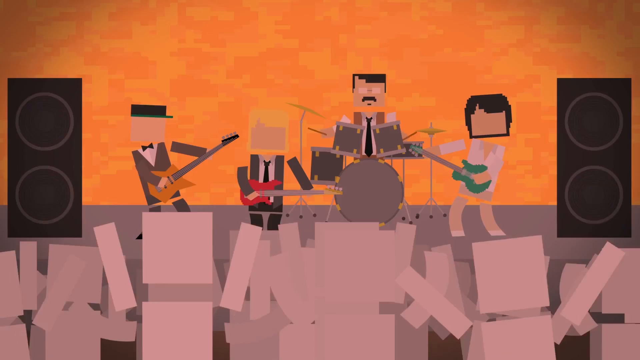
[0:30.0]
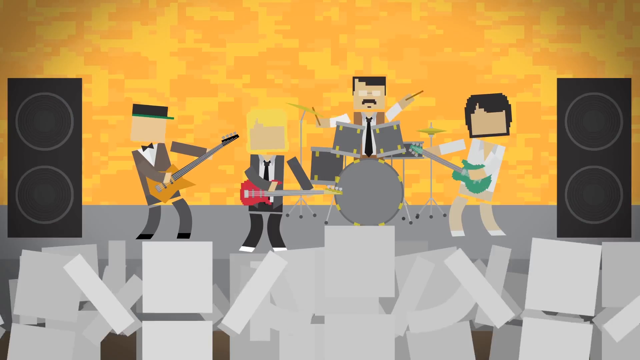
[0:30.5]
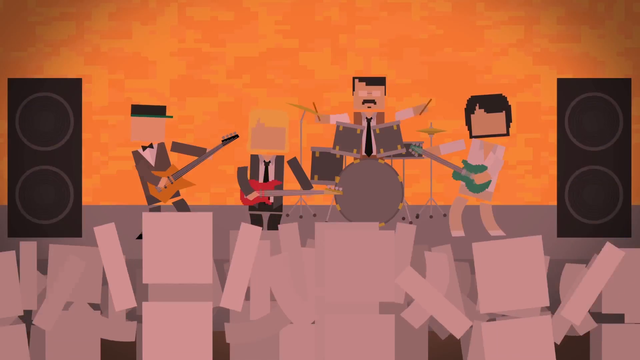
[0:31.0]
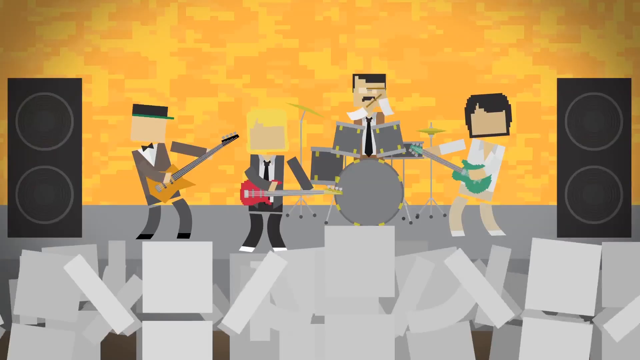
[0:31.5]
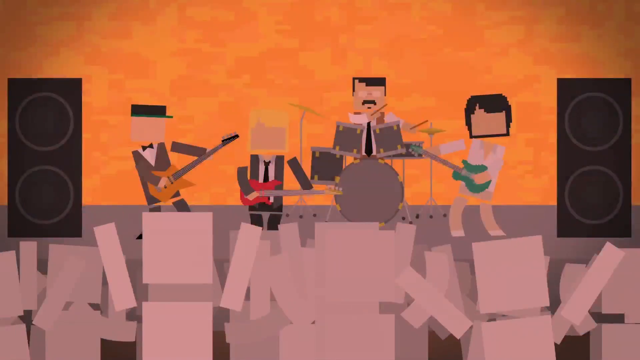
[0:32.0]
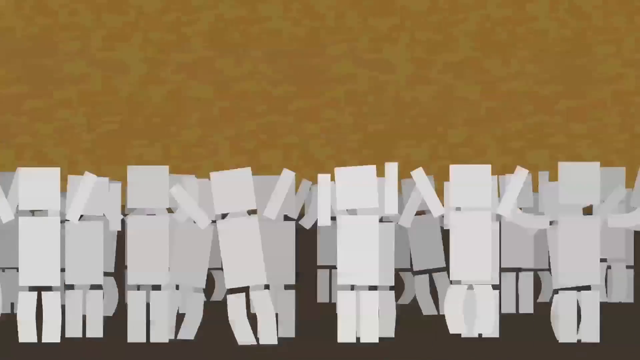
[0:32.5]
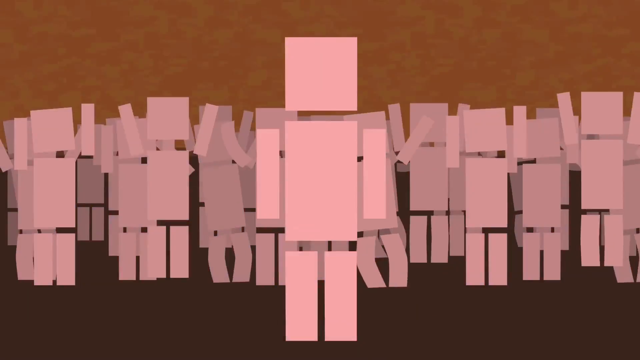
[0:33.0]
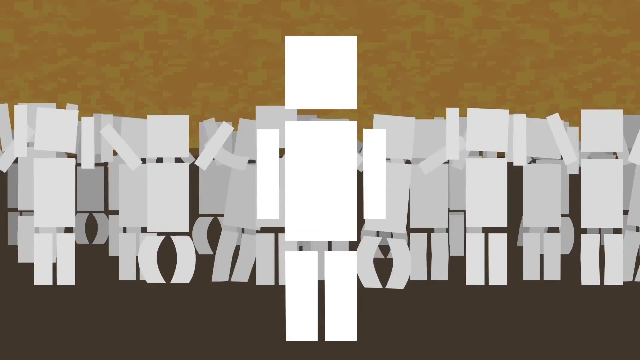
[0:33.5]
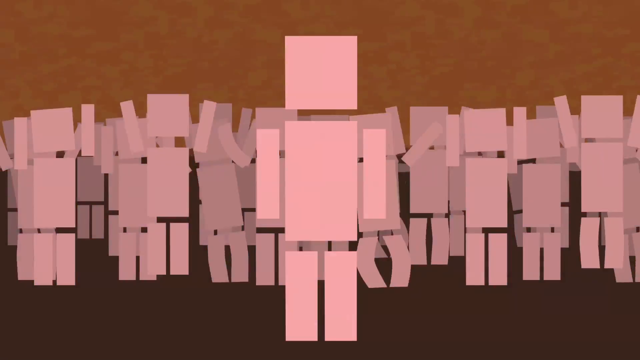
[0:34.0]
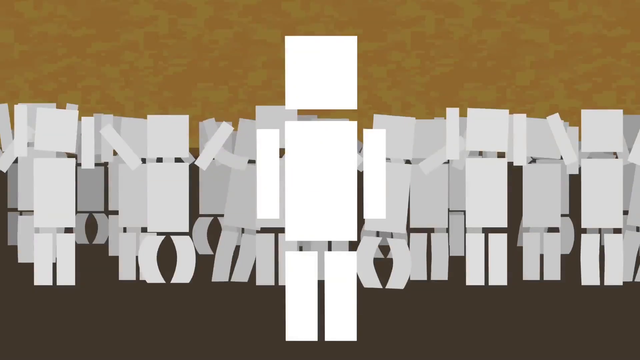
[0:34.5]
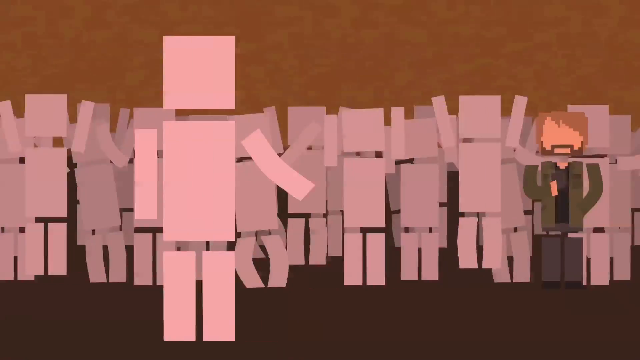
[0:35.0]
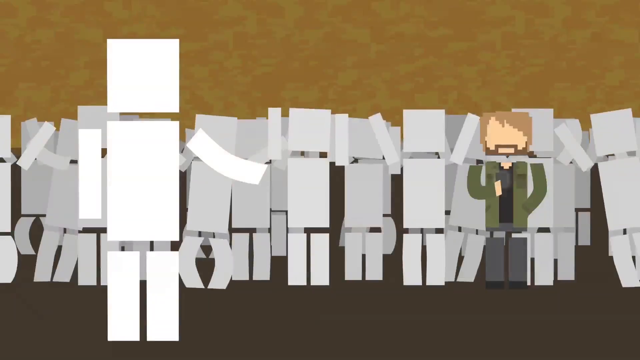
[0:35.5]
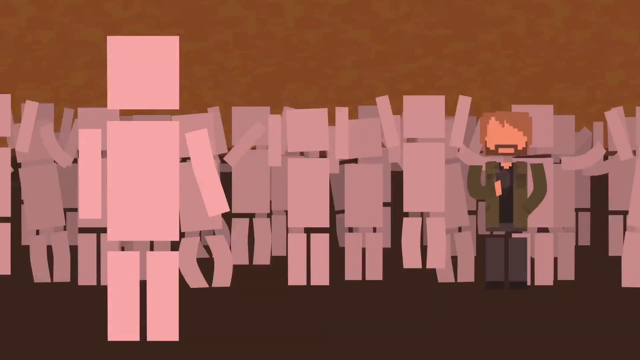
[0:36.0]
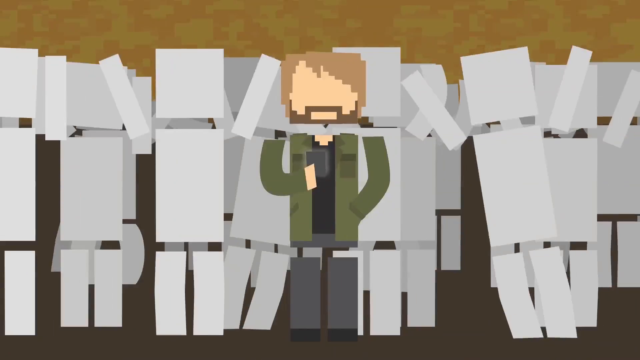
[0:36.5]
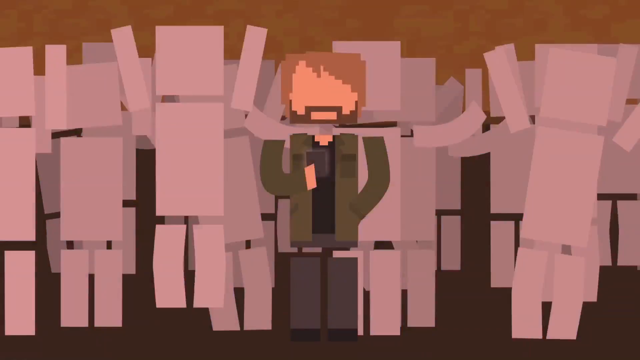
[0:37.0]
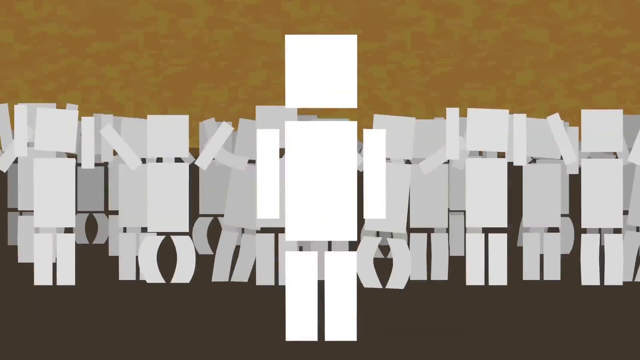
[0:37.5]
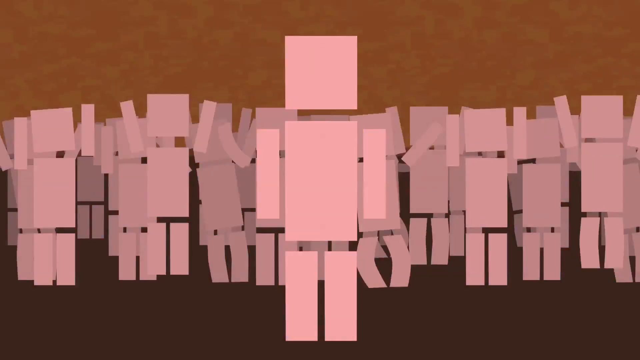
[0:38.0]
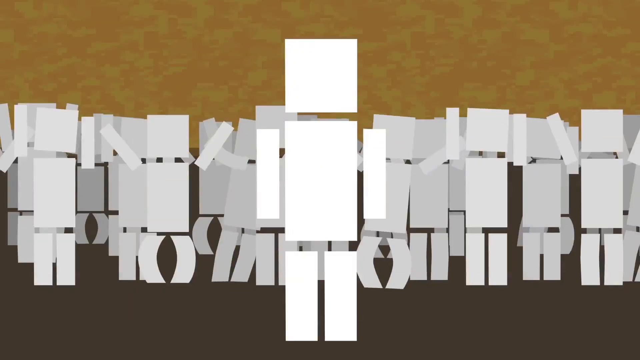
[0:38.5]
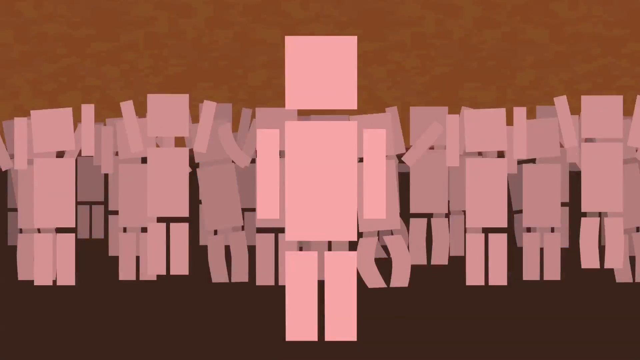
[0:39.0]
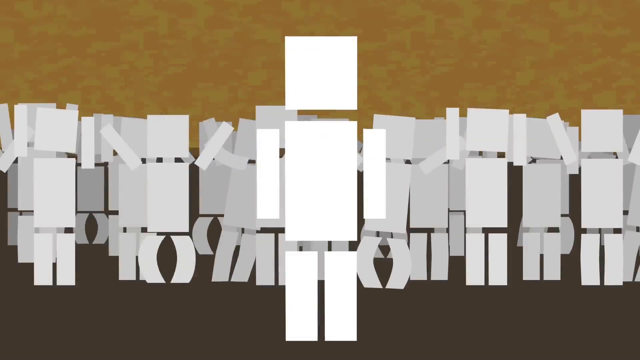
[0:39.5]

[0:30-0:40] The band continues playing as the lights flash red on and off. The camera pans to the right, revealing the crowd with the main blockhead character in the foreground; the crowd jumps up and down, waving their hands in the air. The camera pans further right to a more developed character in a similar block style, but with pigment in his skin and some hair, wearing a green outfit over his torso and gray pants, with a beard connecting to his mustache in a goatee. The camera pans quickly back to the main blockhead character, who is slowly moving his head up and down.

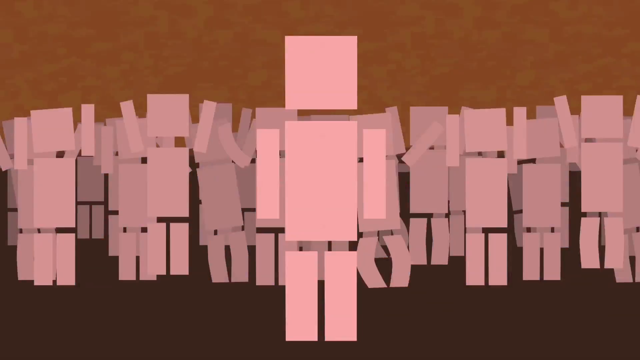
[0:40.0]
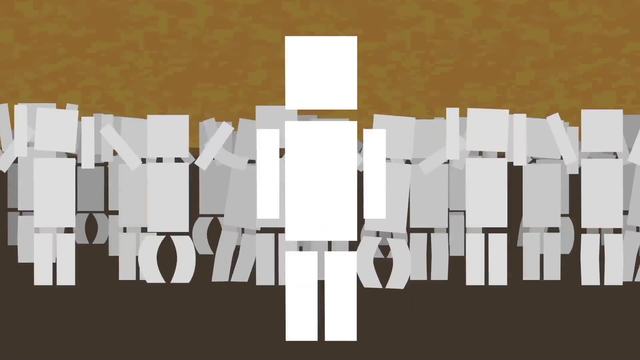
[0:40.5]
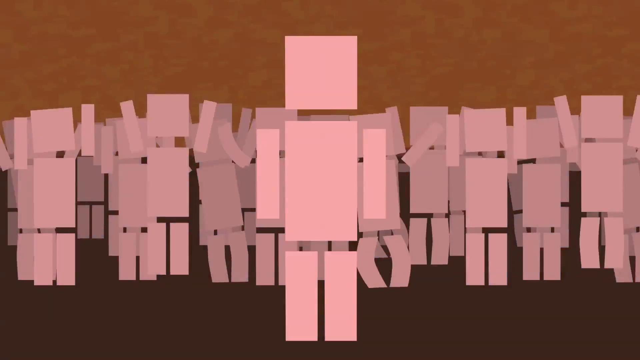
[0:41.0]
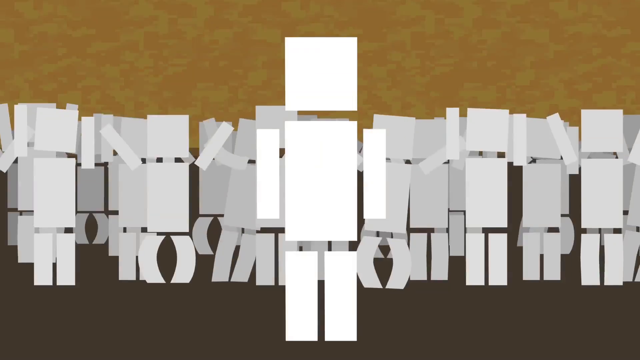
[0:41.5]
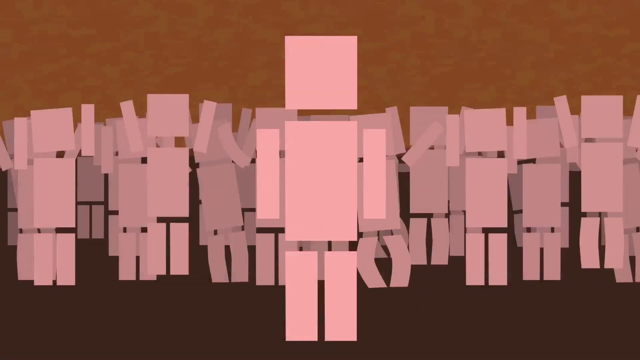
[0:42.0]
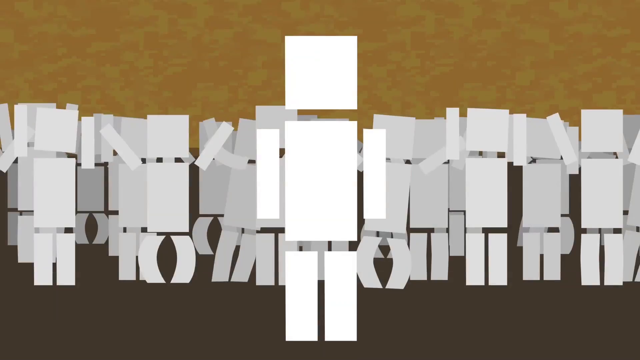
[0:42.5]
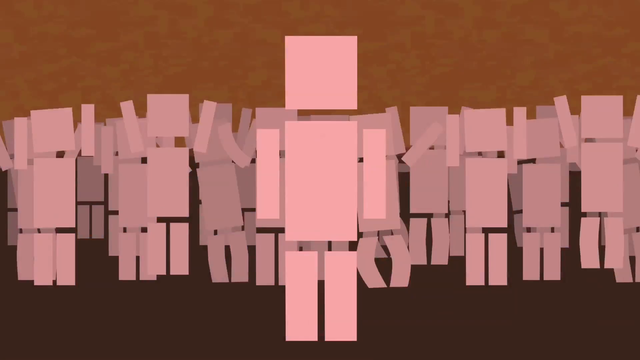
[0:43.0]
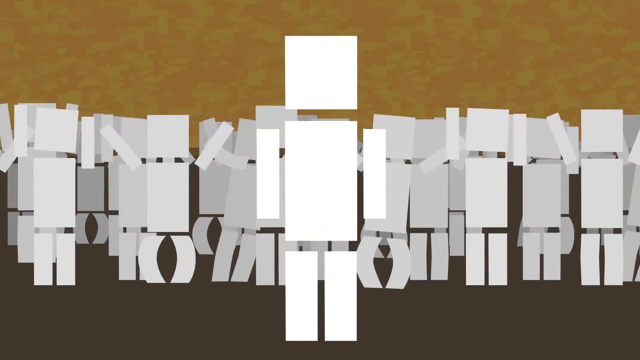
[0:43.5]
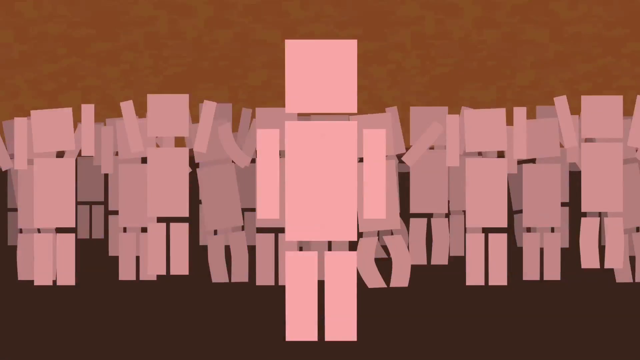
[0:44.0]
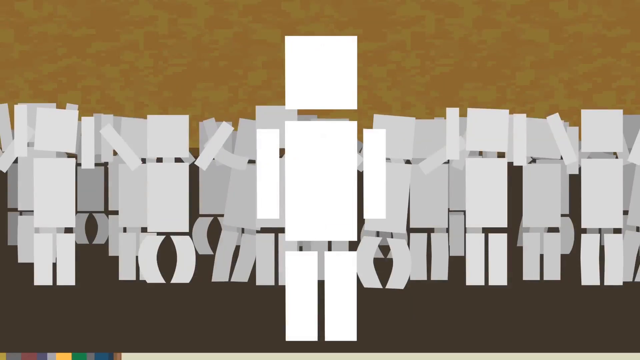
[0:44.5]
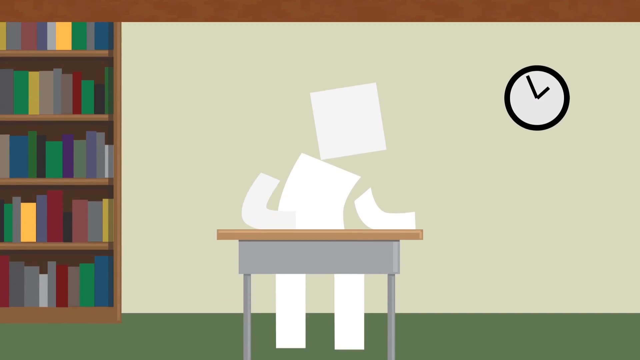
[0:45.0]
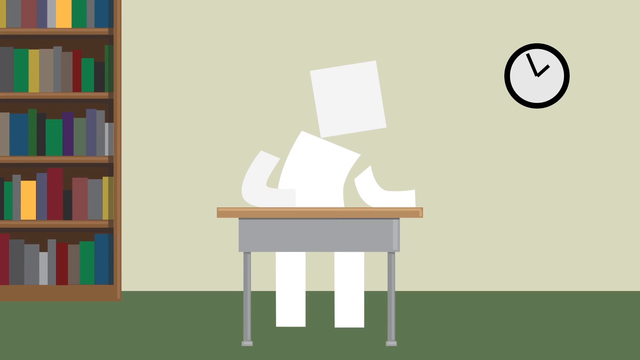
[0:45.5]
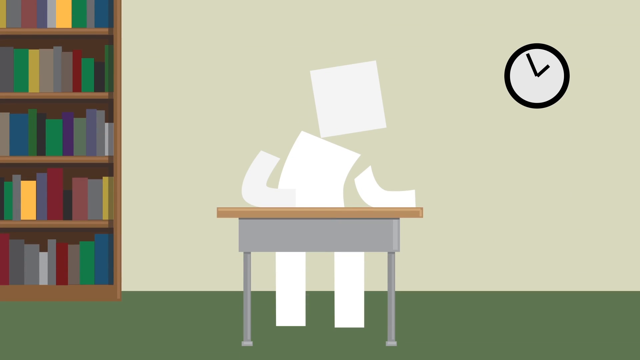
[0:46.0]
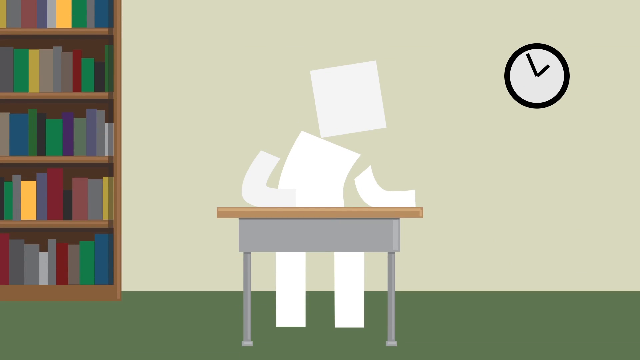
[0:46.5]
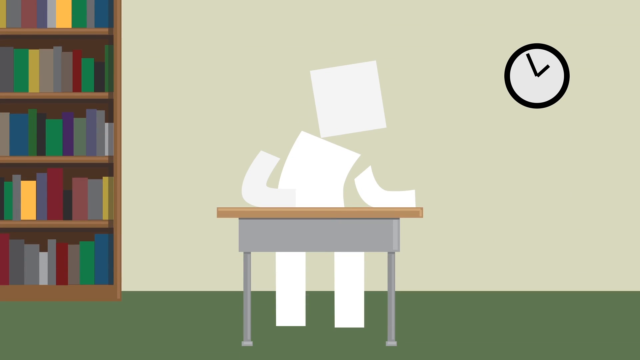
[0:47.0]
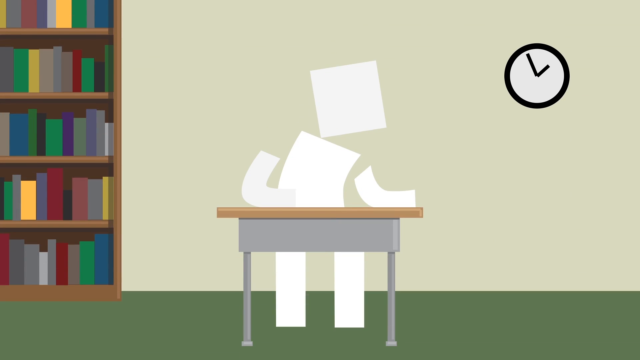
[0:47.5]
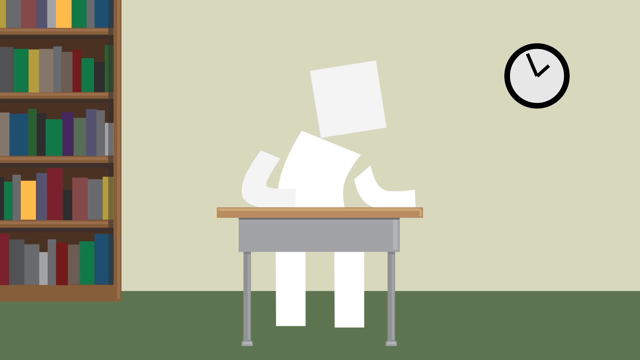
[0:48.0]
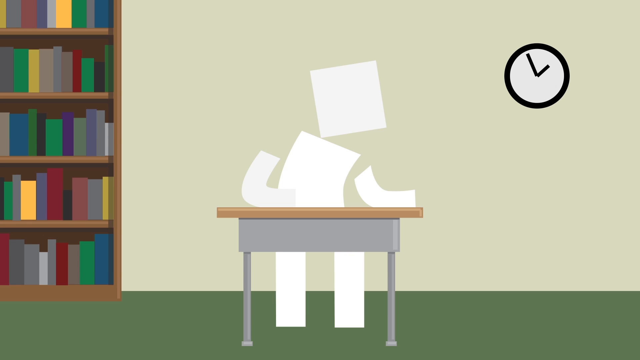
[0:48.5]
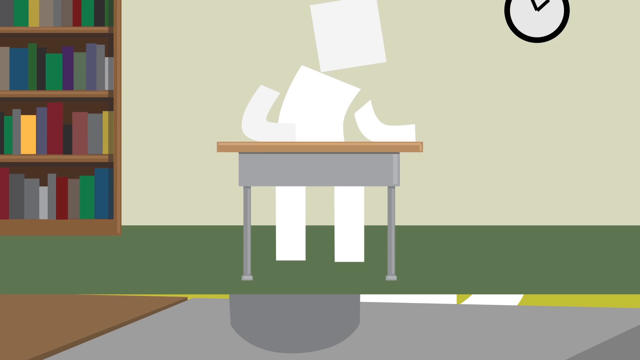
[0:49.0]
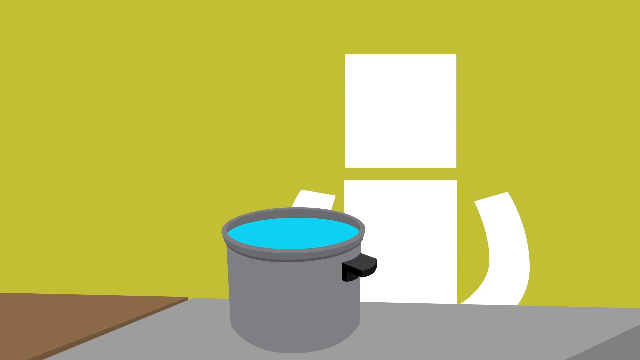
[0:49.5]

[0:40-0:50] The blockhead character continues, but looks like he is running low on energy. A wipe transition leads to the same classroom scene, with the clock in the upper right-hand corner and the bookshelf on the left side of the frame. The white blockhead character sits at the desk facing the camera, looking like he is slightly leaning to his left. The scene wipes up in another transition to the blockhead character against a flat olive greenish-yellow background. He appears to be at a cooking pot, looking at a stock pot on the oven range.